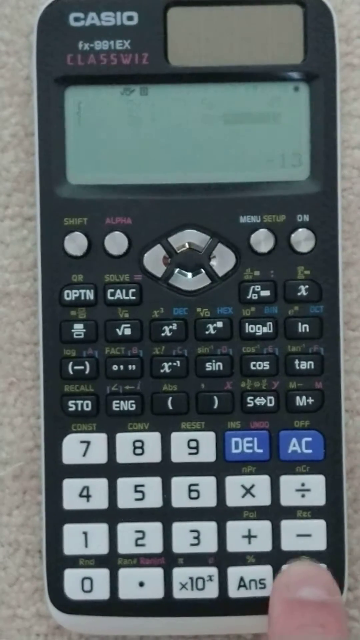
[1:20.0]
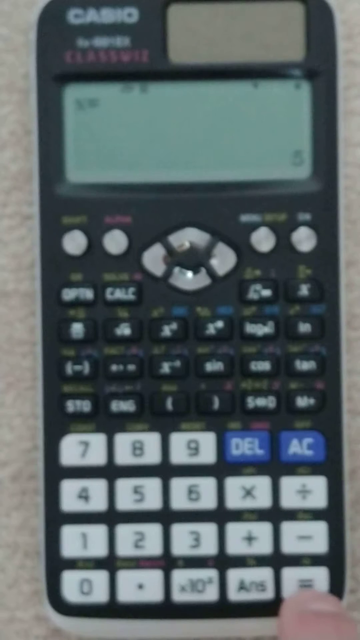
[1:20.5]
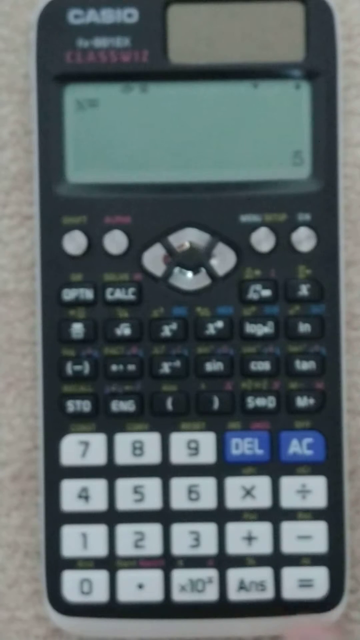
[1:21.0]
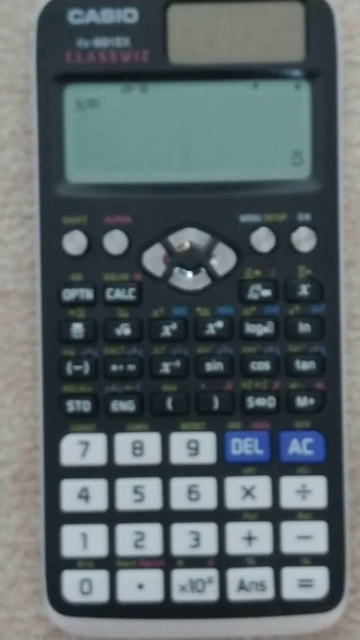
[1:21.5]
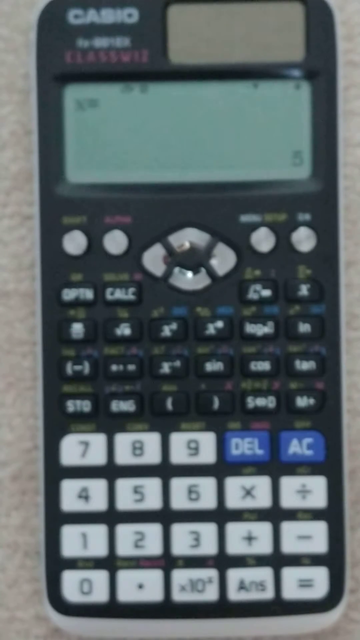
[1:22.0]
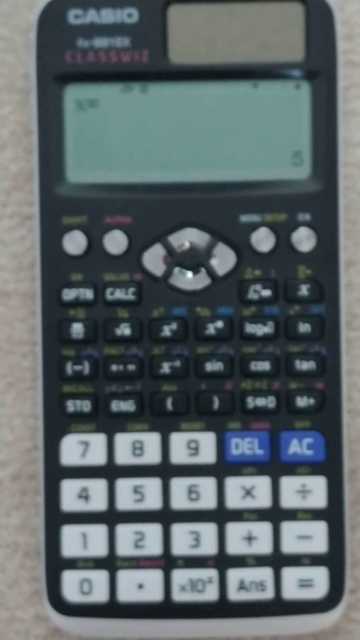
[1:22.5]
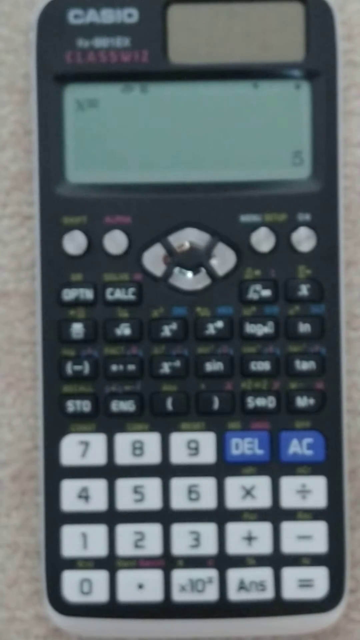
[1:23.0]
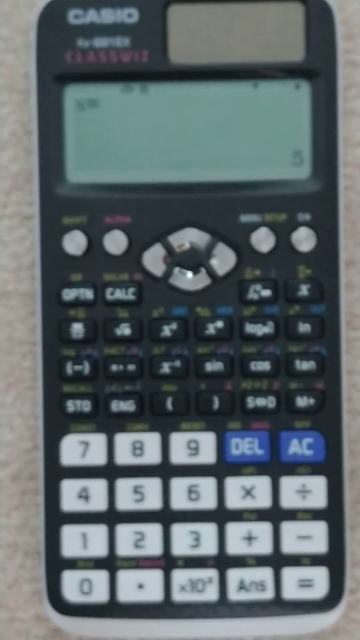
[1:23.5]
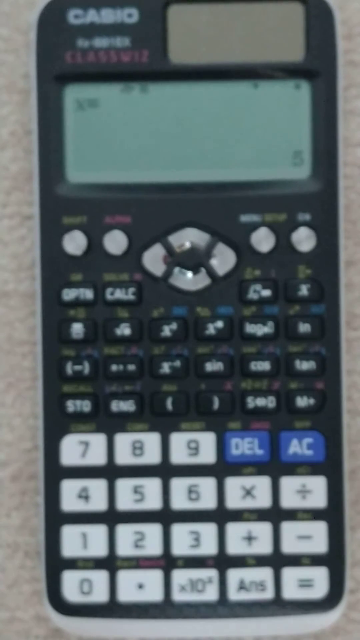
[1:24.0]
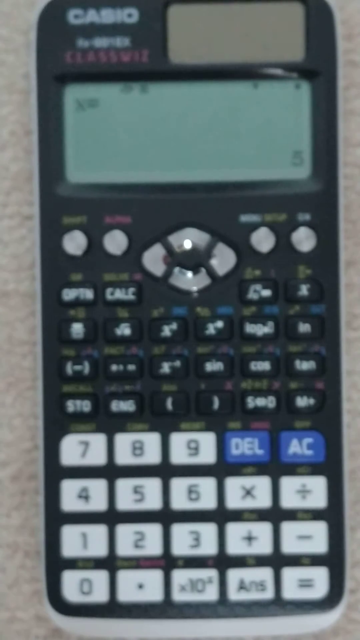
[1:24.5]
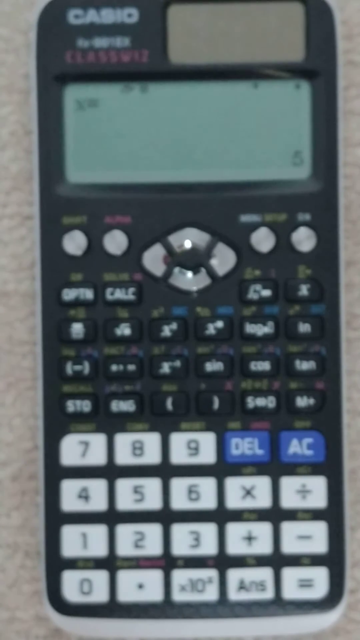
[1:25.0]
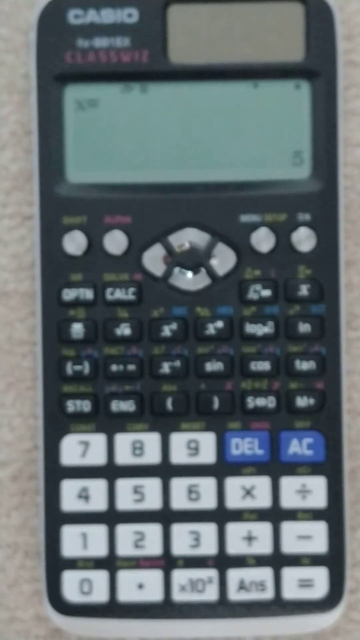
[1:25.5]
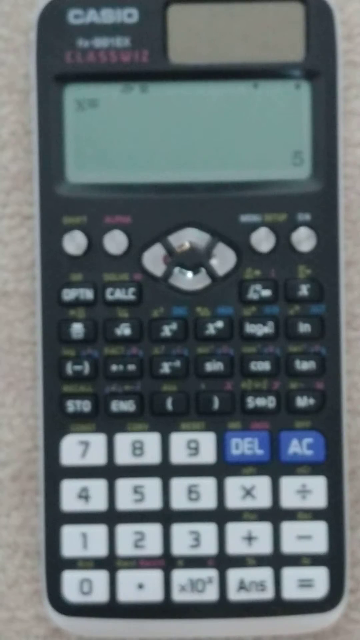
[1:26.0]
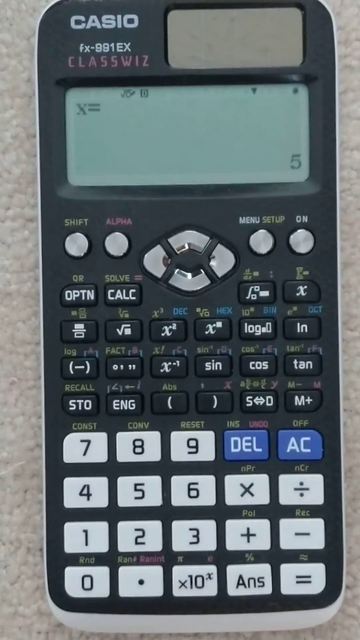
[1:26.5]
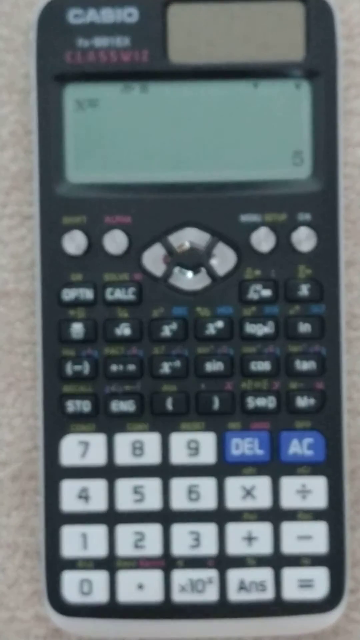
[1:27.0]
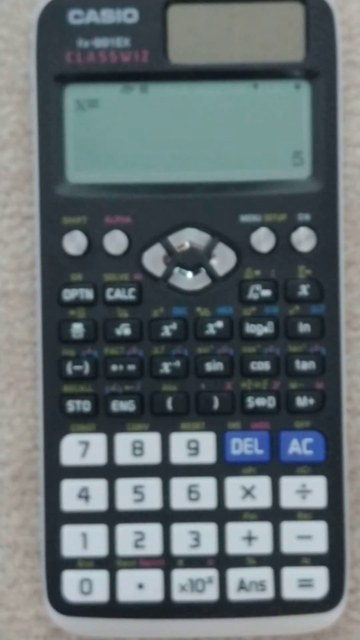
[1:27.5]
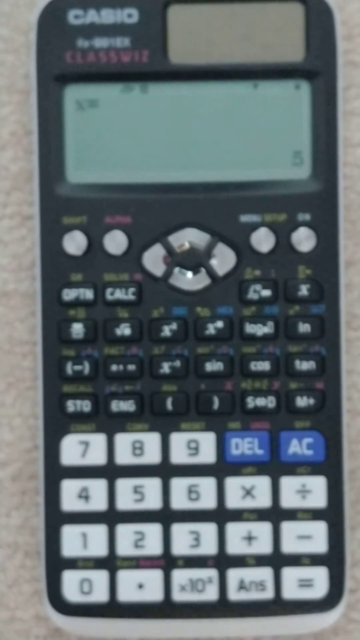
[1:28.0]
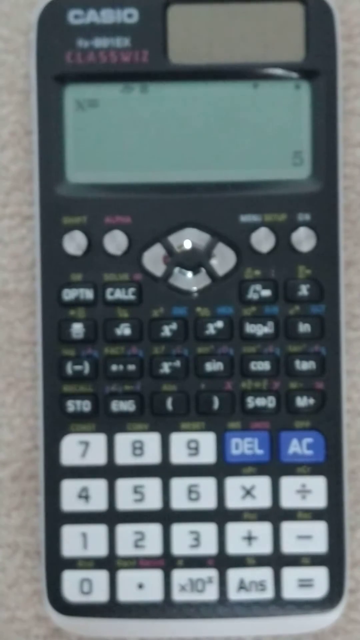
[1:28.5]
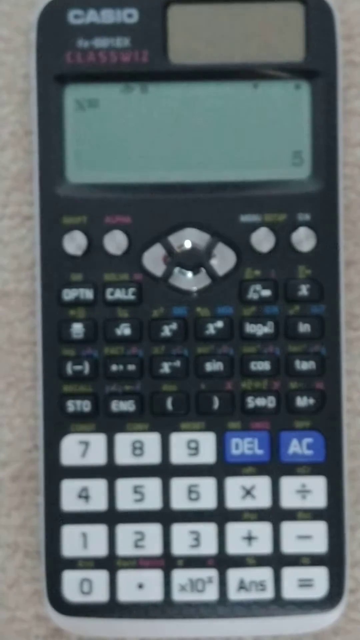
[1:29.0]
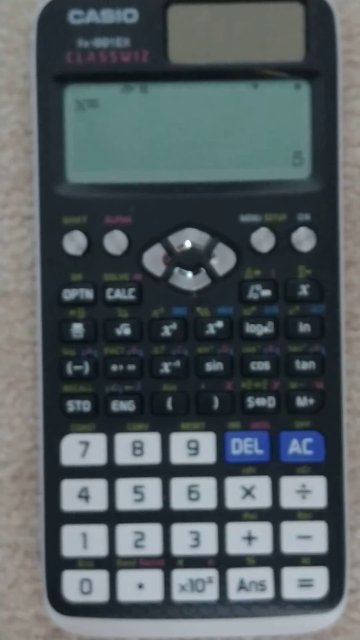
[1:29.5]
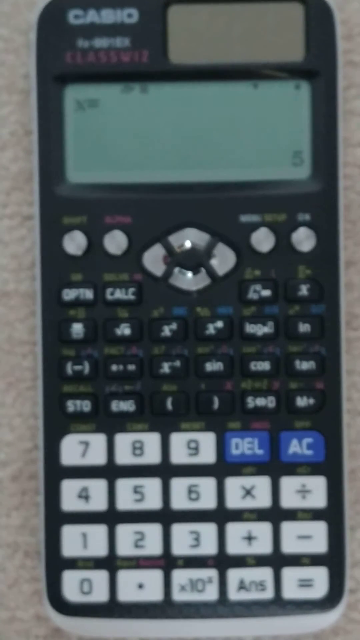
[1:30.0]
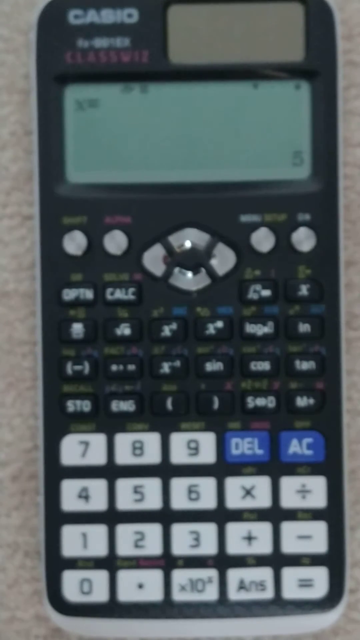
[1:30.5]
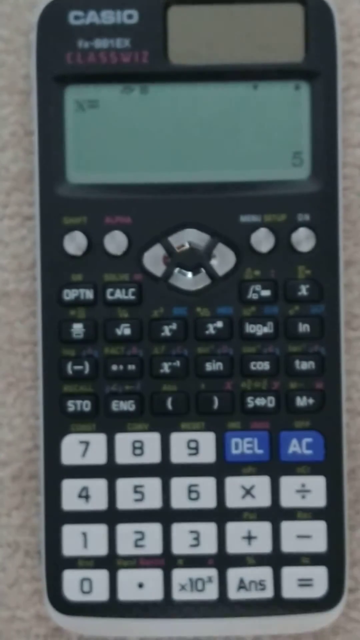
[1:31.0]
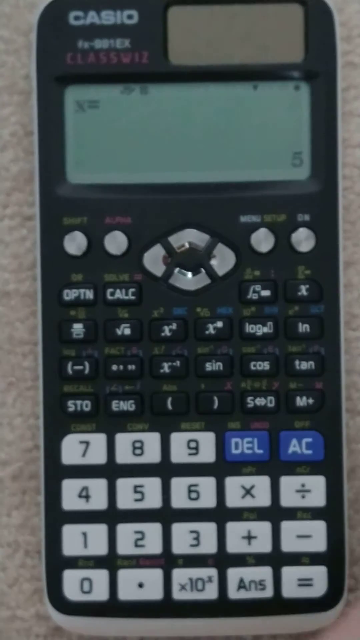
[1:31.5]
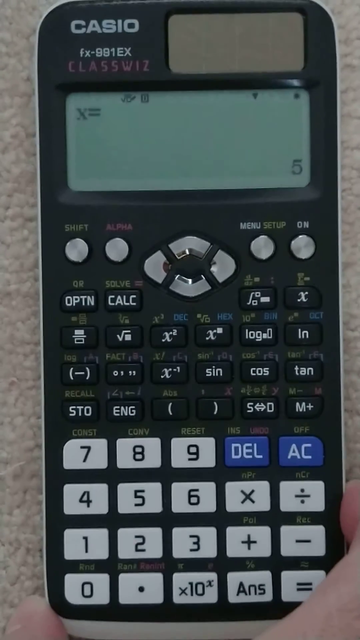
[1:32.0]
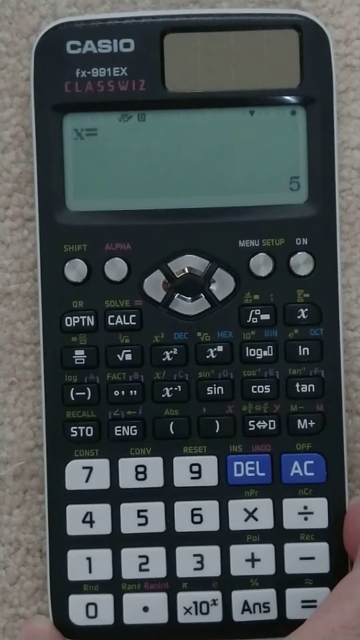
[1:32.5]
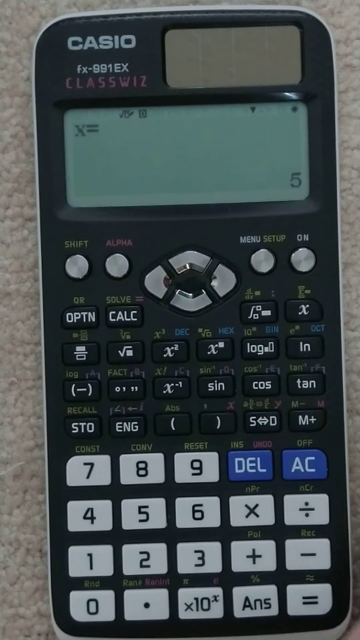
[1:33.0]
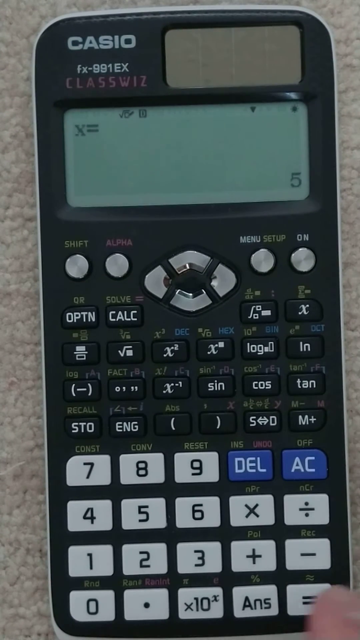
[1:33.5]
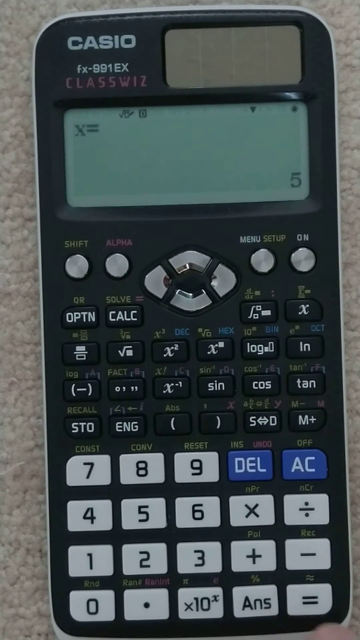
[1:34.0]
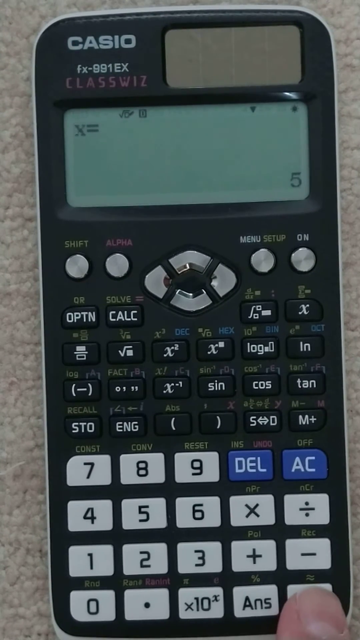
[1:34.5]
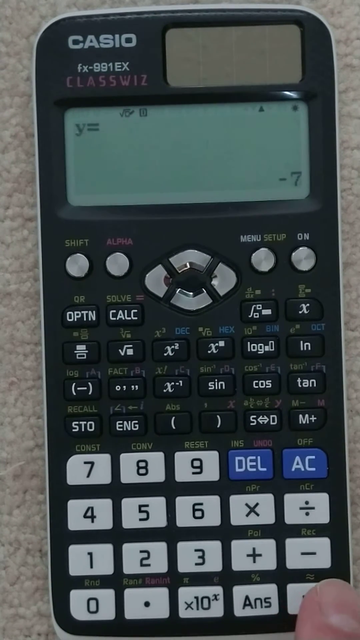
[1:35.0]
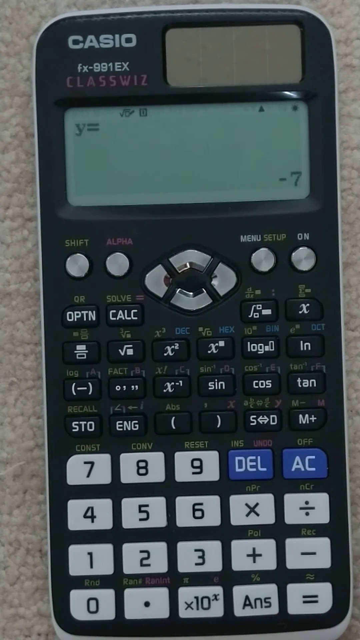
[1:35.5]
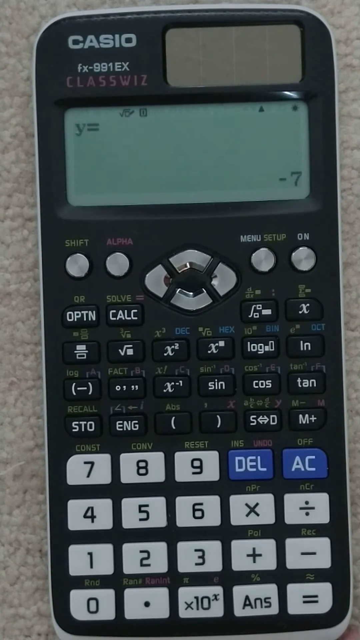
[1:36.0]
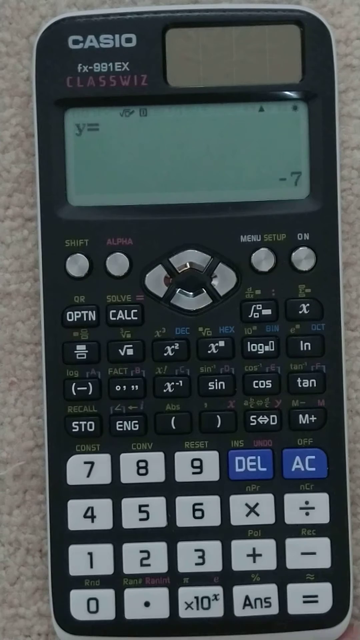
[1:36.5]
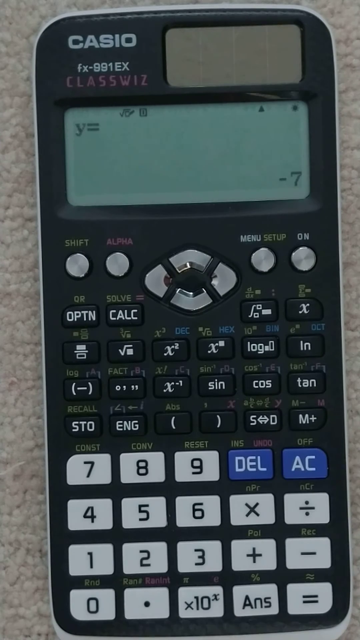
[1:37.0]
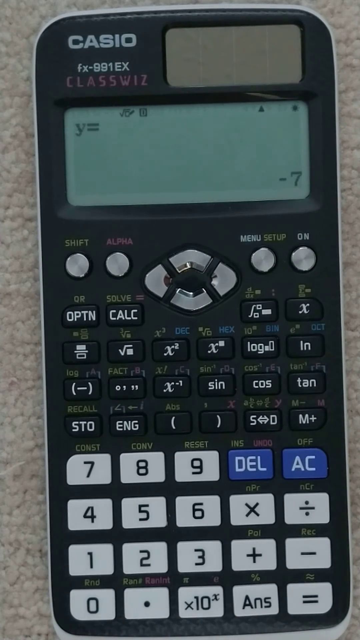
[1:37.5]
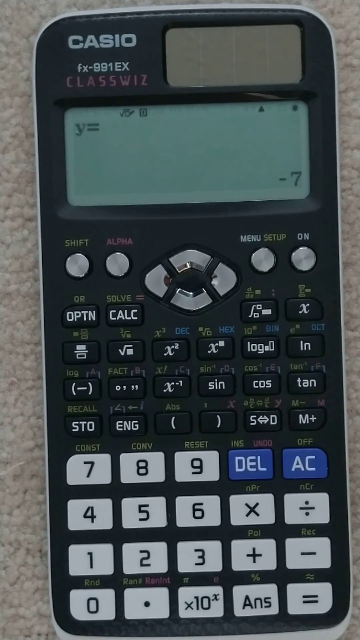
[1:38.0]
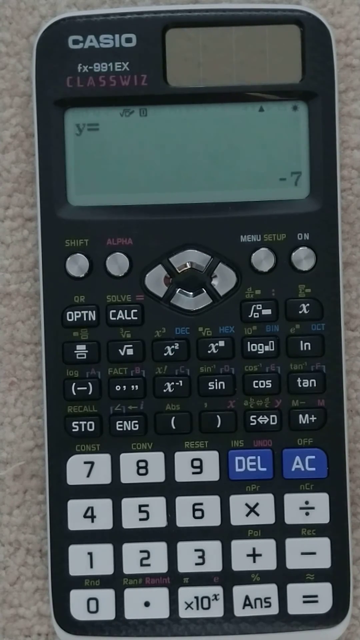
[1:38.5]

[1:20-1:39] The shot starts with out-of-focus framing of the Casio Classwiz calculator, and the user momentarily leaves the frame to try to restore focus. Then x = 5 is clearly displayed, and after the user presses the equals button, the calculator displays y = −7.